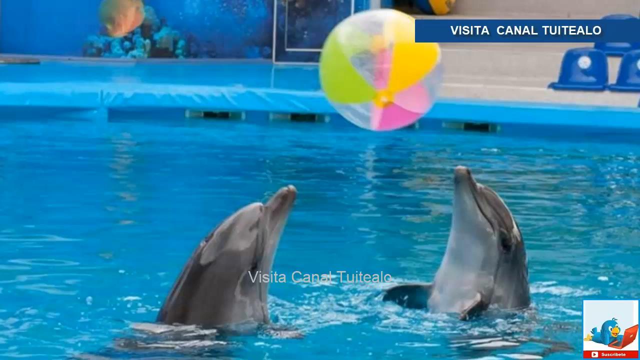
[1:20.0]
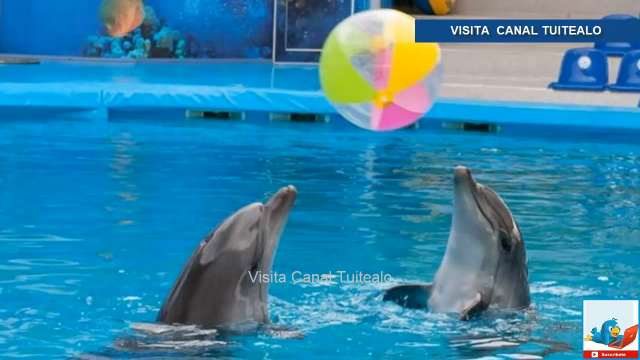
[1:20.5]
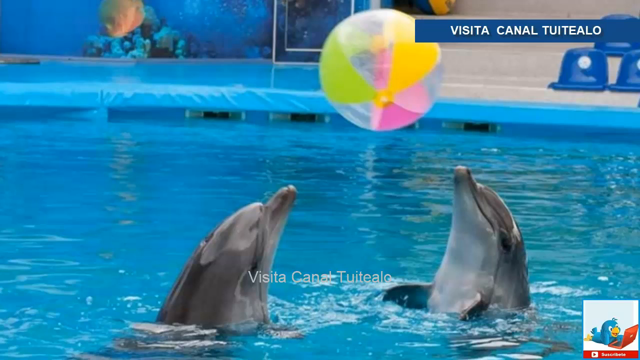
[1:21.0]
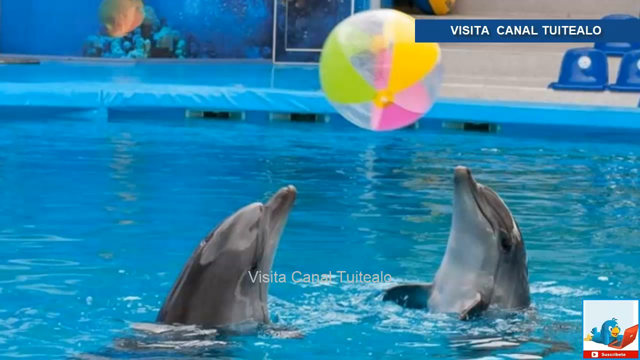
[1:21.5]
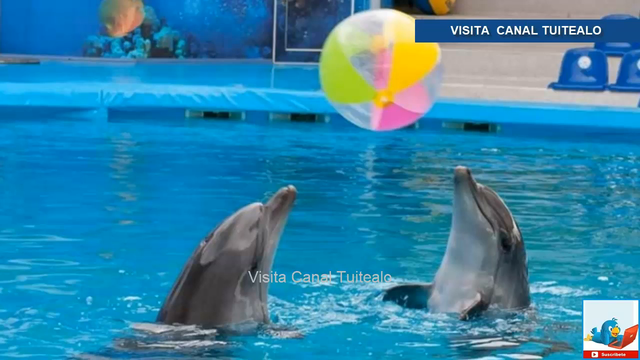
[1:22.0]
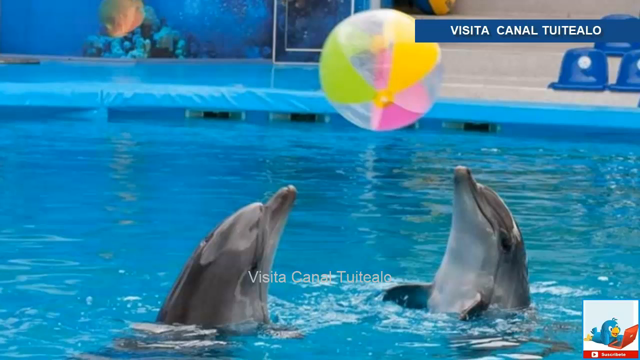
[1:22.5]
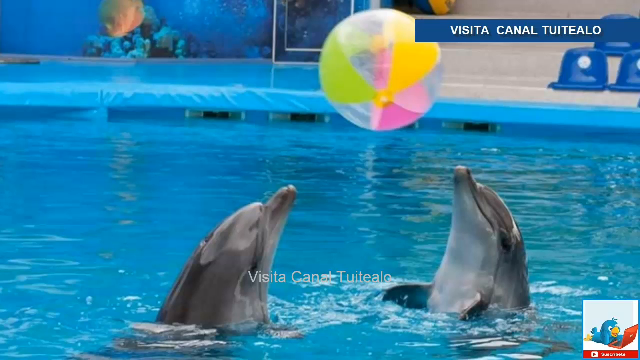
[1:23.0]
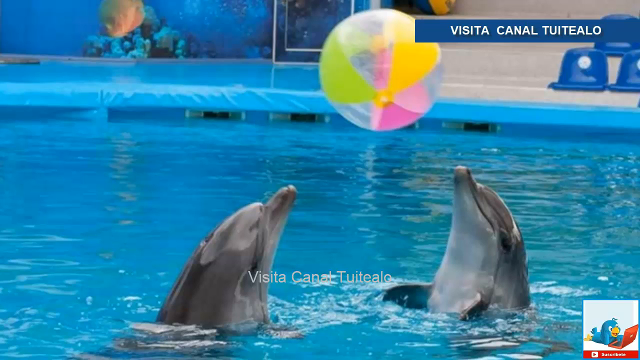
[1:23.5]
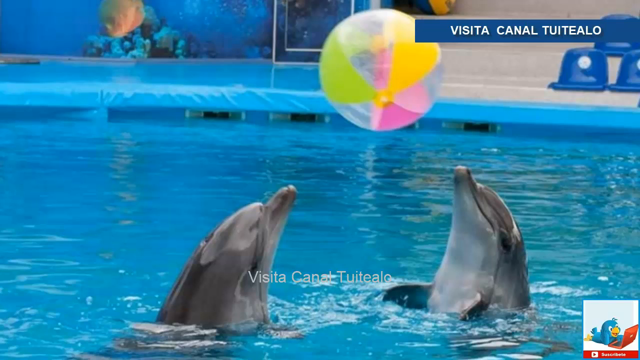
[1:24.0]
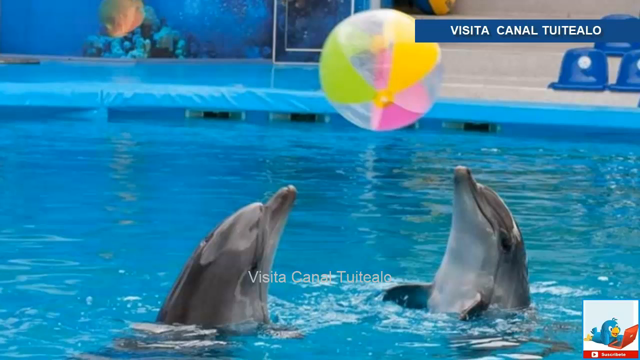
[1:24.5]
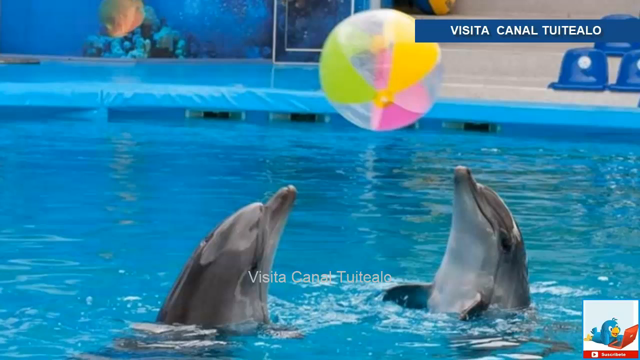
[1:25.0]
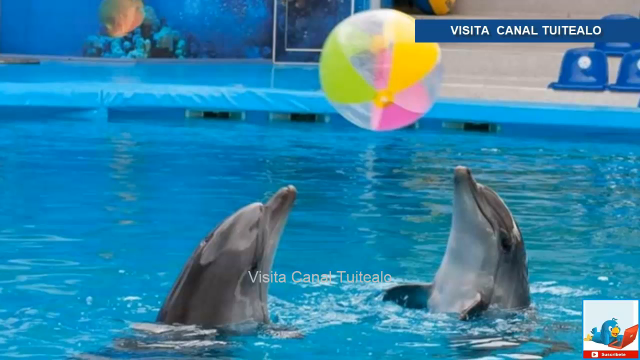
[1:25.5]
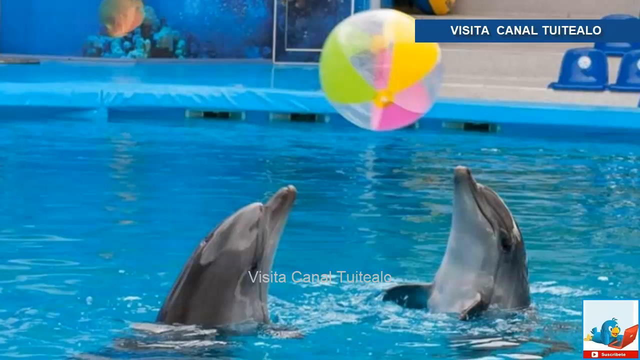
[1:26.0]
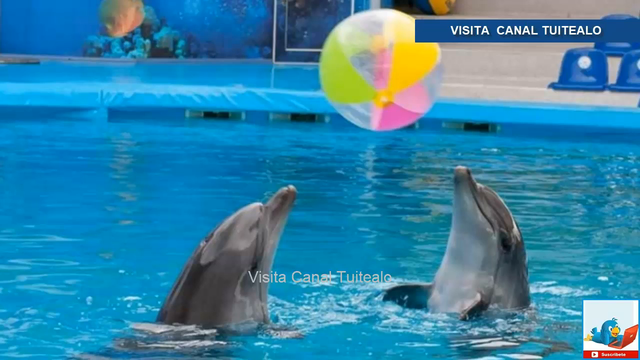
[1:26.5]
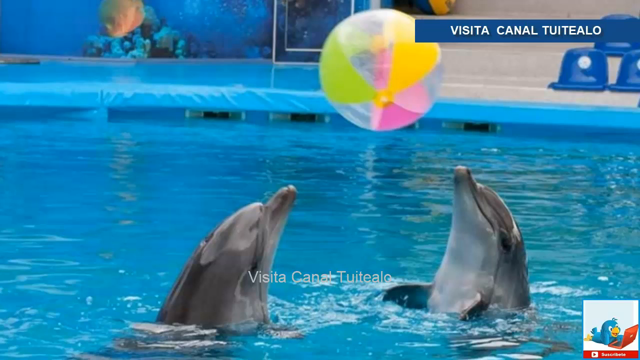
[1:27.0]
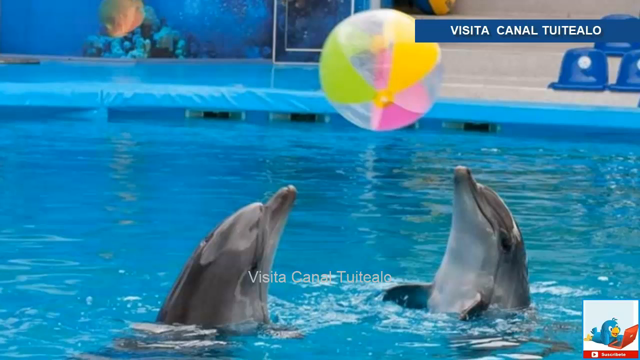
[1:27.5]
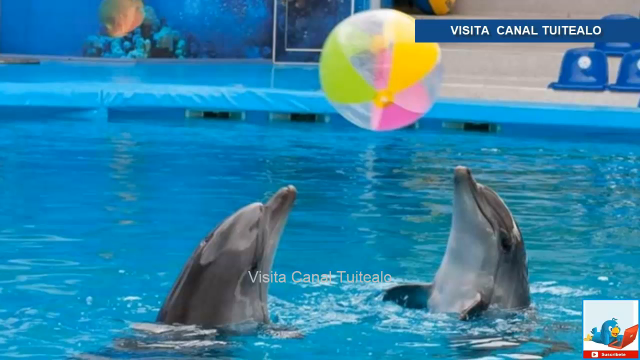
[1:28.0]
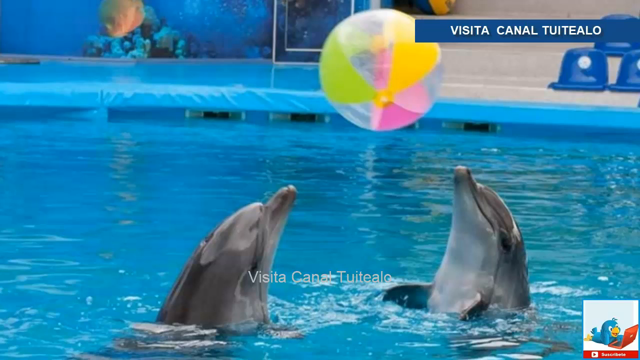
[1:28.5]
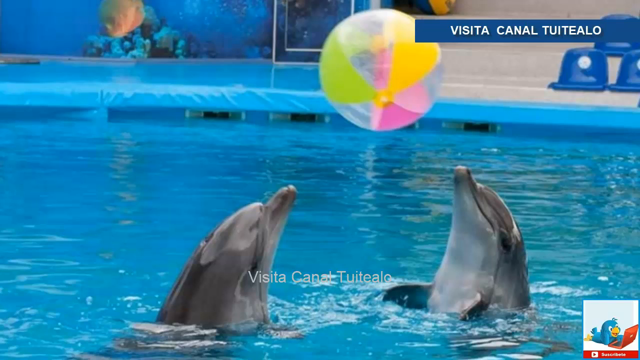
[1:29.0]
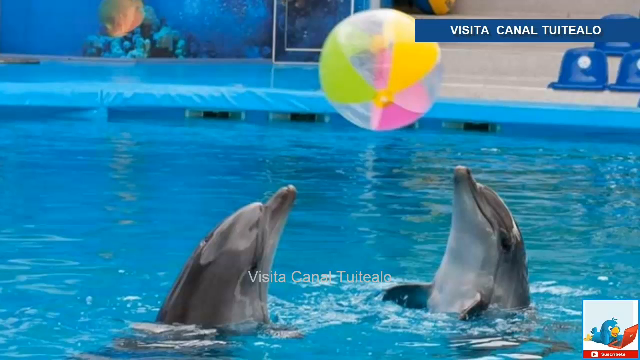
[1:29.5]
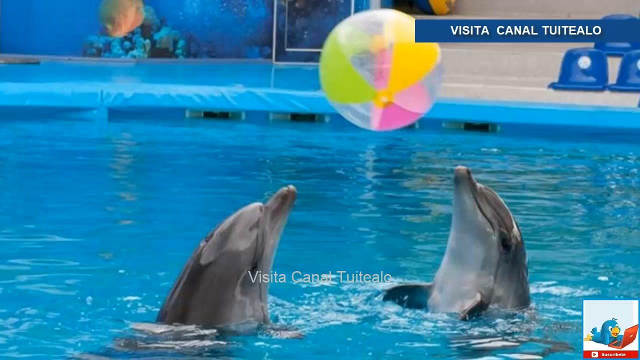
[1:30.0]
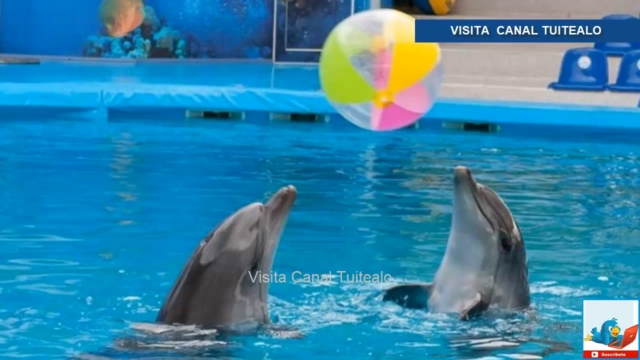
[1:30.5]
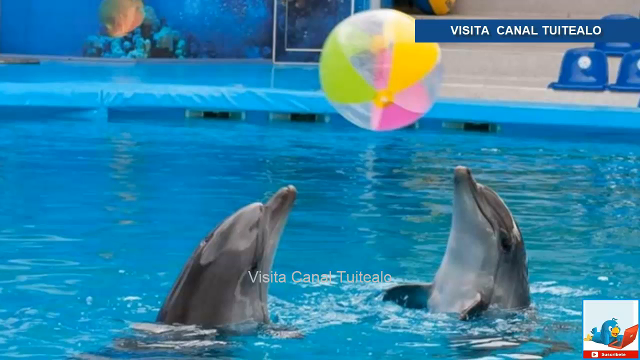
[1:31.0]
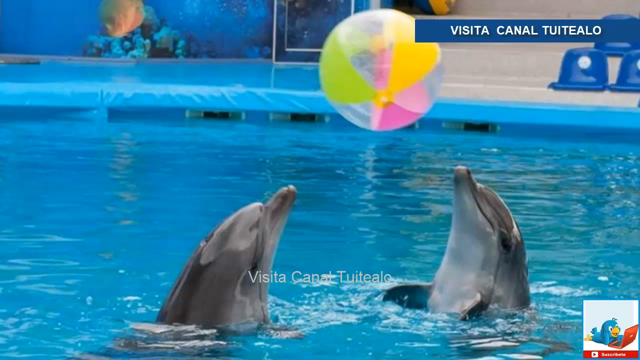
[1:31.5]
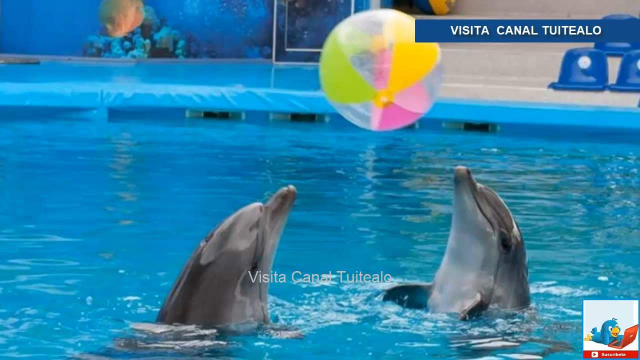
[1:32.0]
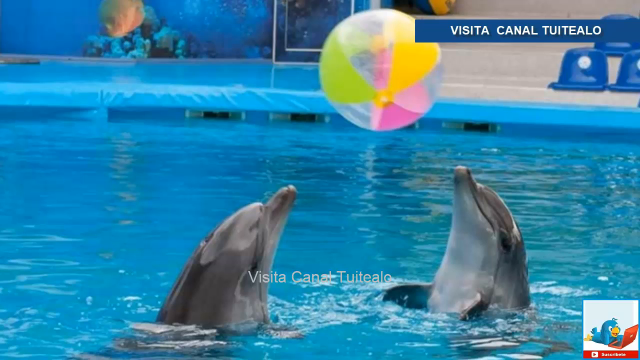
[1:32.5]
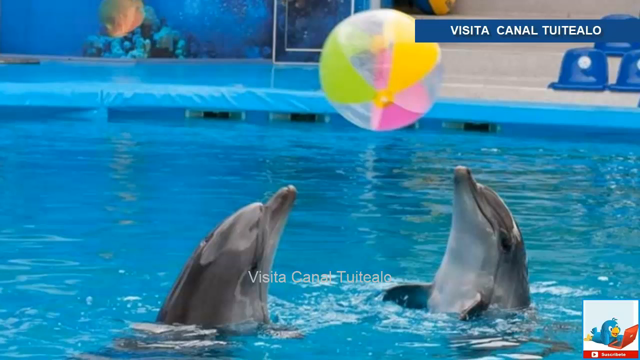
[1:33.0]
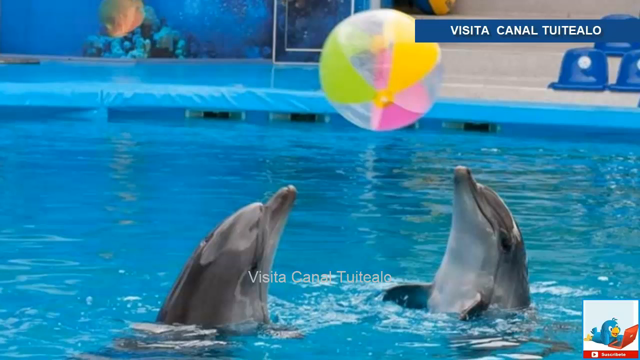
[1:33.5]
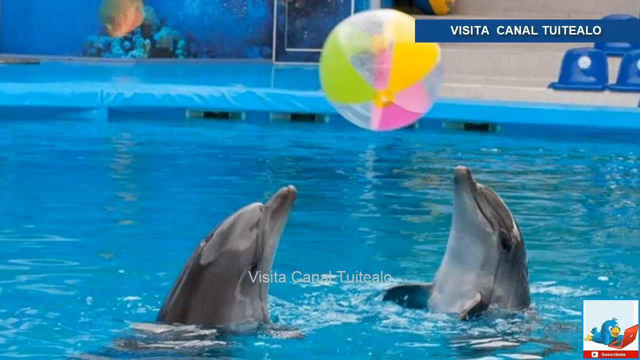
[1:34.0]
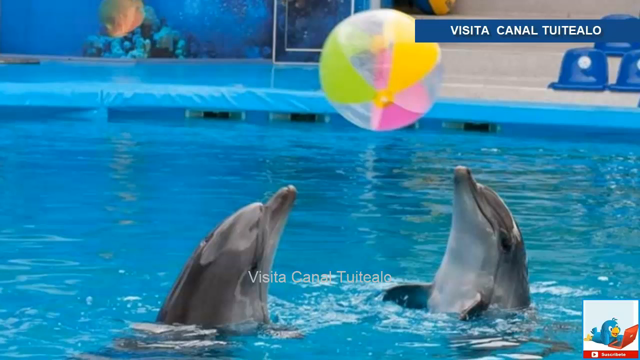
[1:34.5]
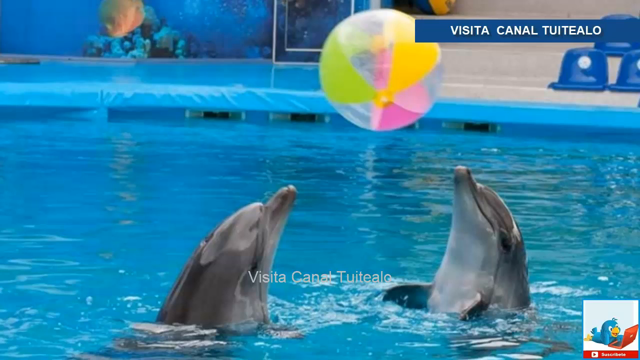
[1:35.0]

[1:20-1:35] The still photograph of the dolphins remains, with the beach ball suspended above them. They look like they are either passing the ball to one another or waiting for it to land. The water is bright blue with visible ripples; around the dolphins it is not so calm, and their fins have been splashing and making more ripples. Under the water the rest of the dolphins' bodies are visible, their tails appearing to face downwards and then curve up a little at the ends. The little bird looking at the red laptop is still in the bottom right of the screen. The photograph looks as though it was taken by a professional photographer, and the swimming pool looks like it is outside.